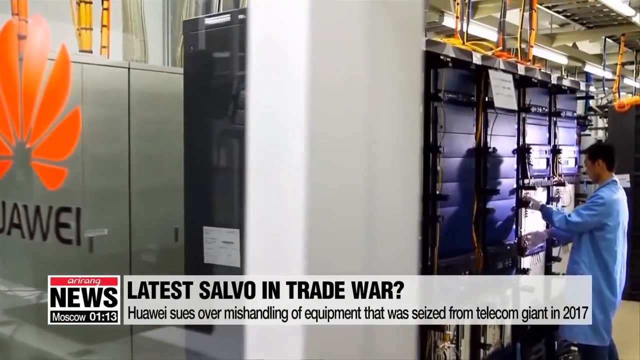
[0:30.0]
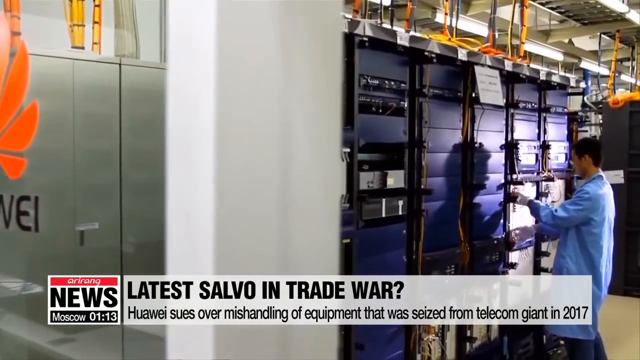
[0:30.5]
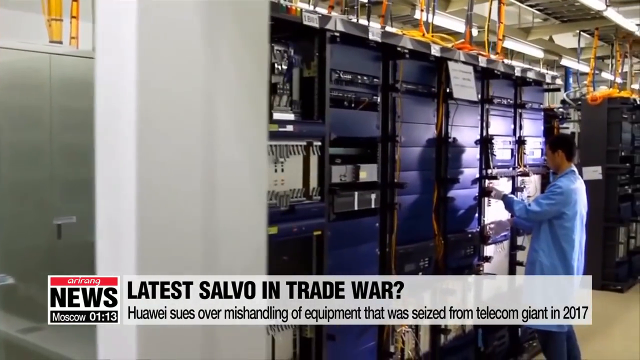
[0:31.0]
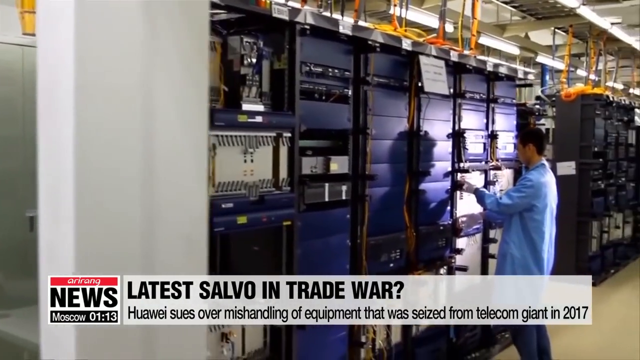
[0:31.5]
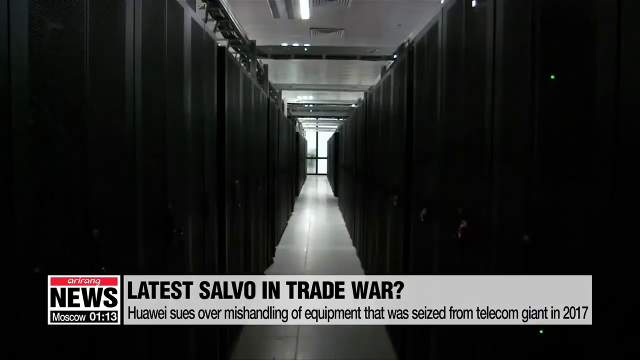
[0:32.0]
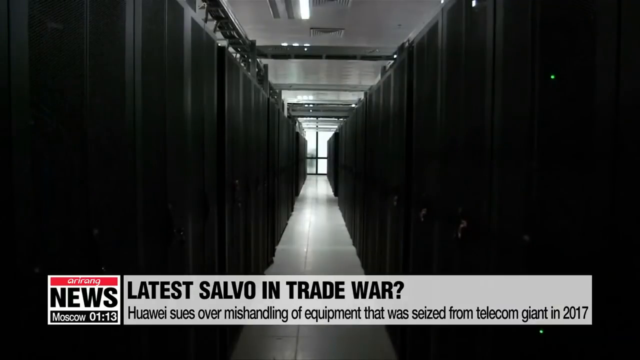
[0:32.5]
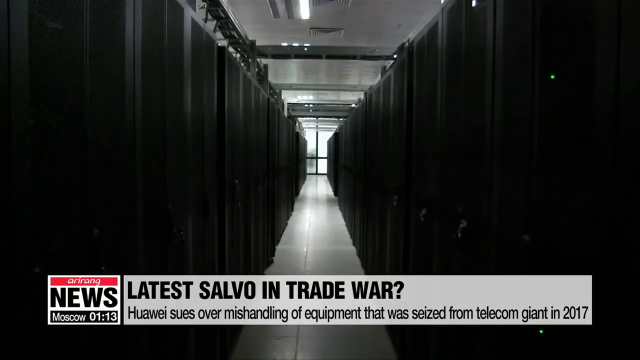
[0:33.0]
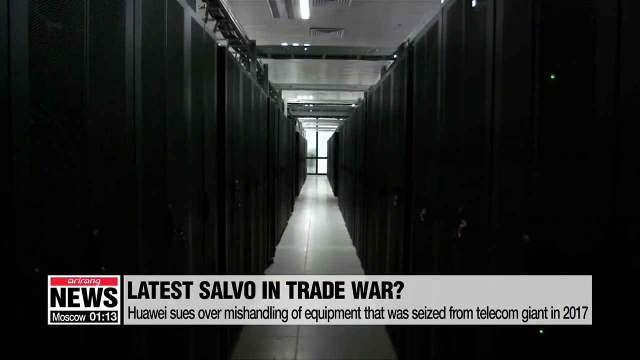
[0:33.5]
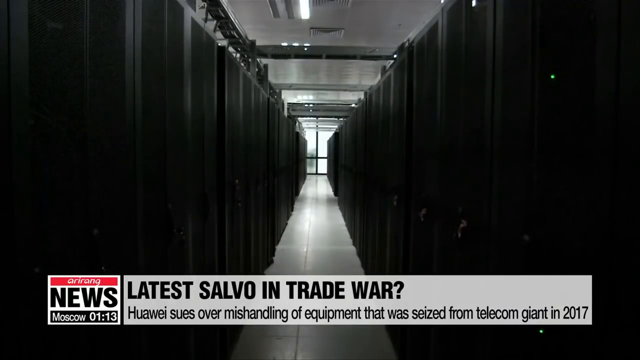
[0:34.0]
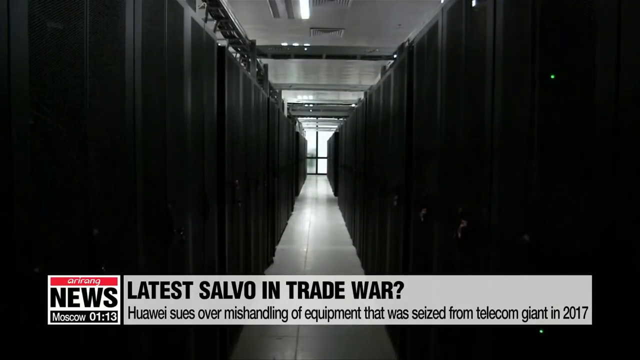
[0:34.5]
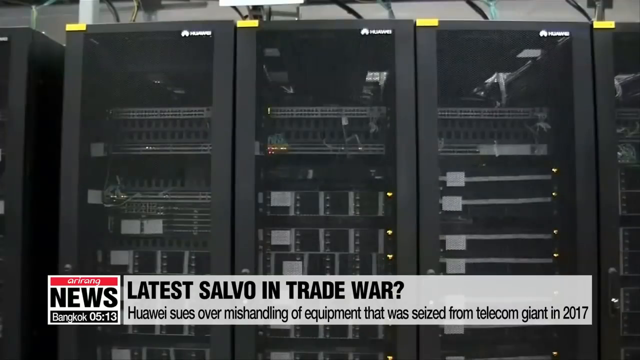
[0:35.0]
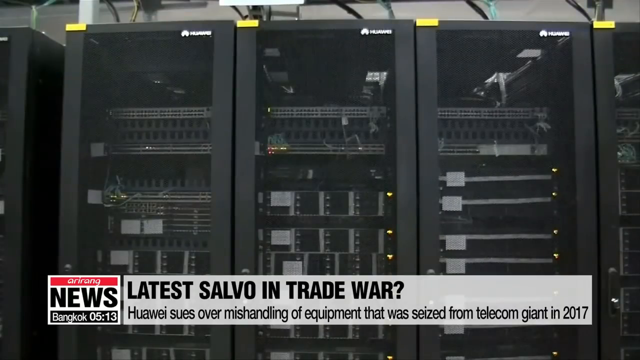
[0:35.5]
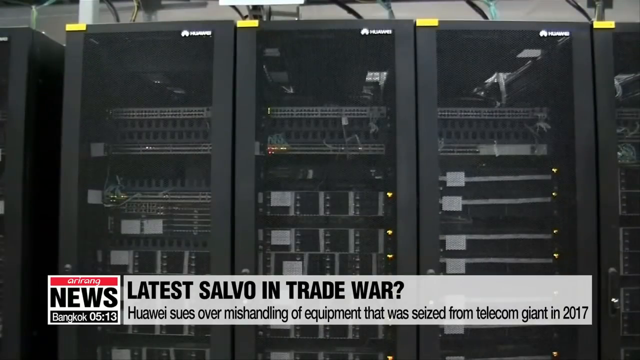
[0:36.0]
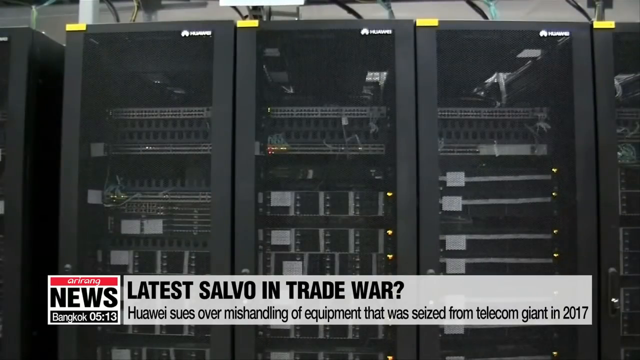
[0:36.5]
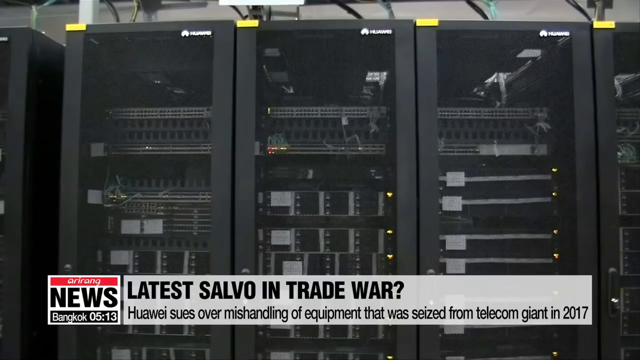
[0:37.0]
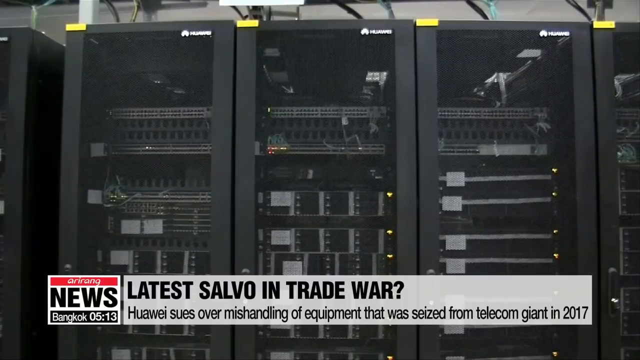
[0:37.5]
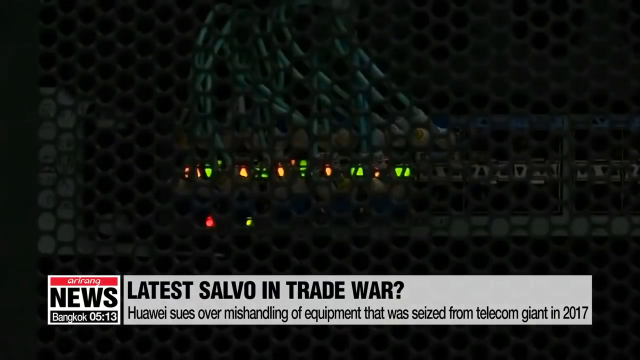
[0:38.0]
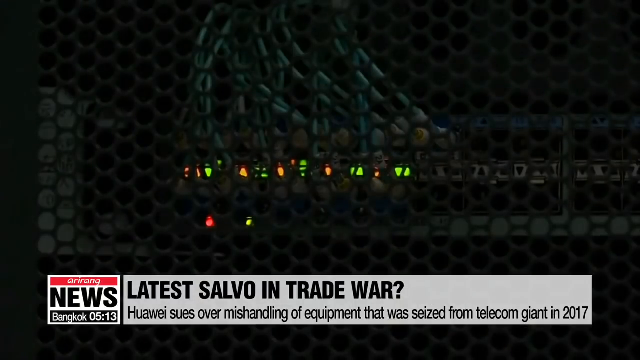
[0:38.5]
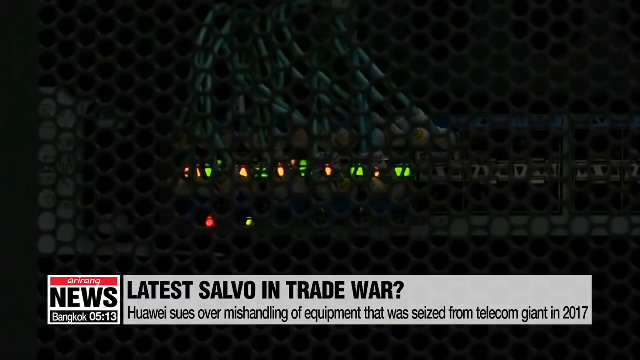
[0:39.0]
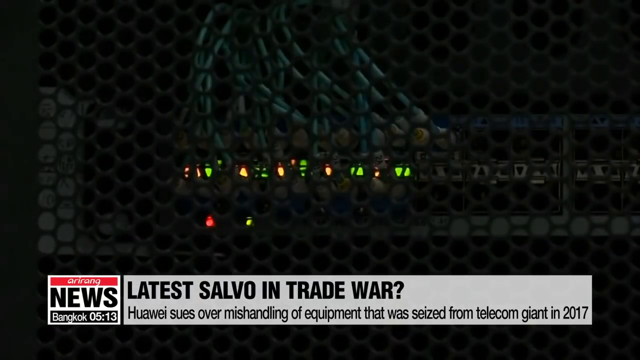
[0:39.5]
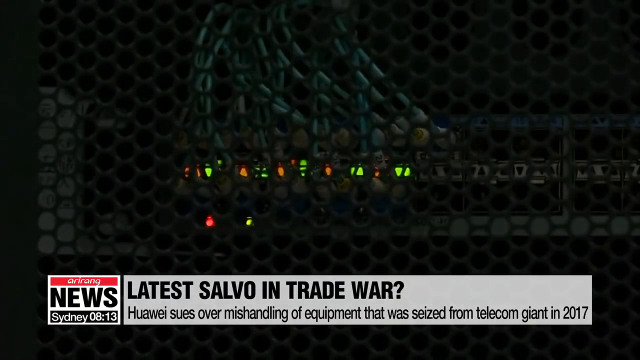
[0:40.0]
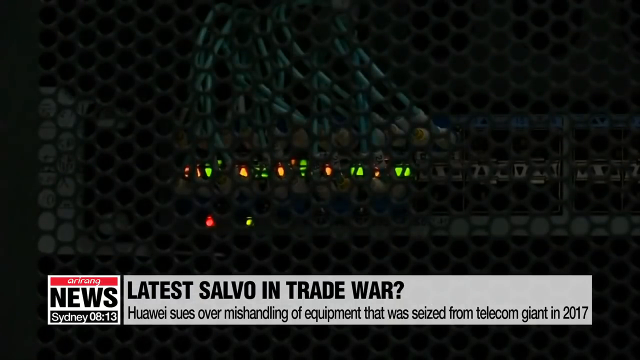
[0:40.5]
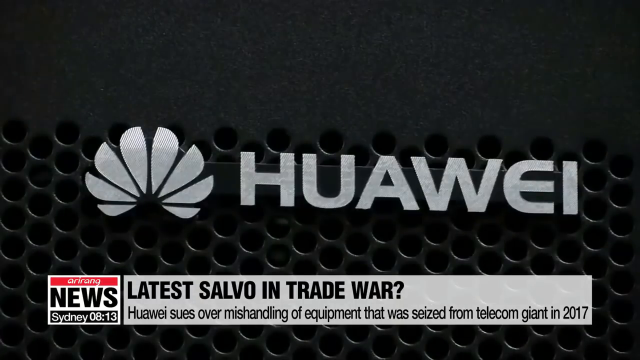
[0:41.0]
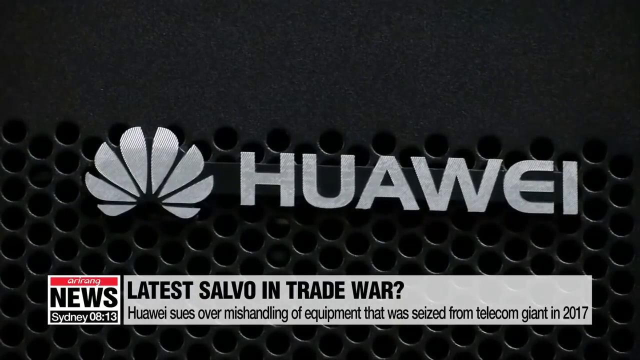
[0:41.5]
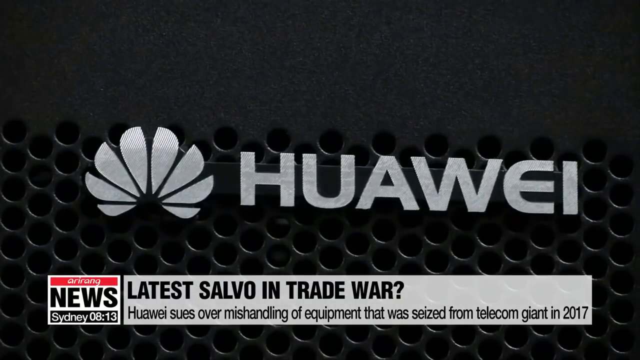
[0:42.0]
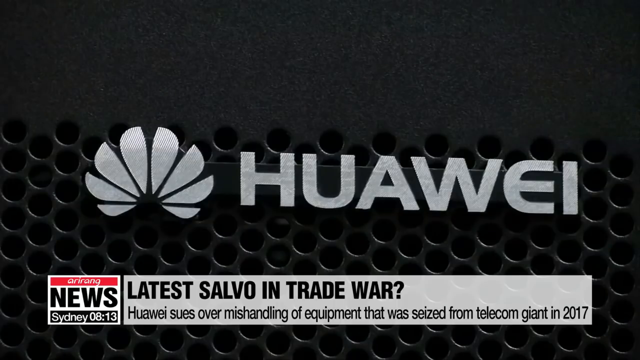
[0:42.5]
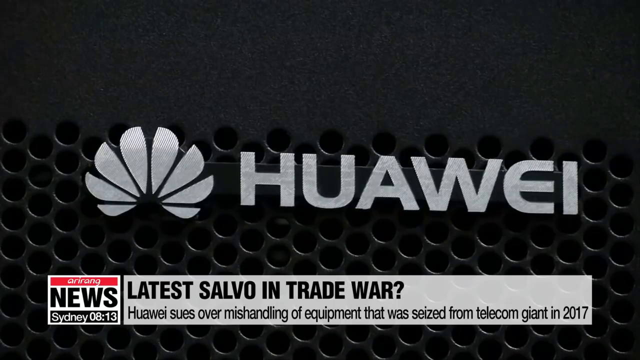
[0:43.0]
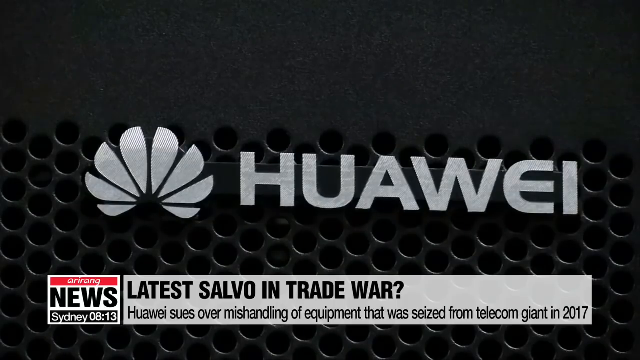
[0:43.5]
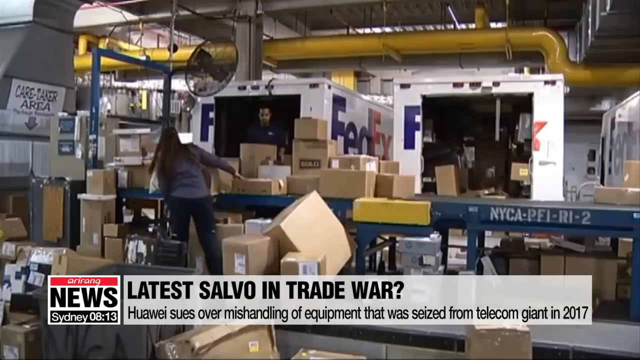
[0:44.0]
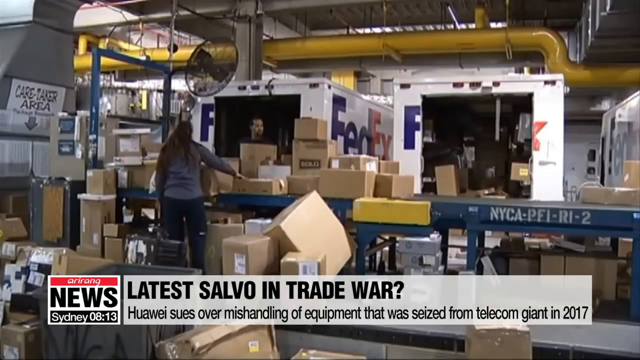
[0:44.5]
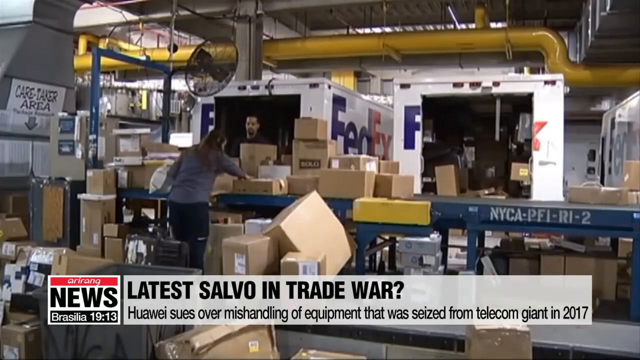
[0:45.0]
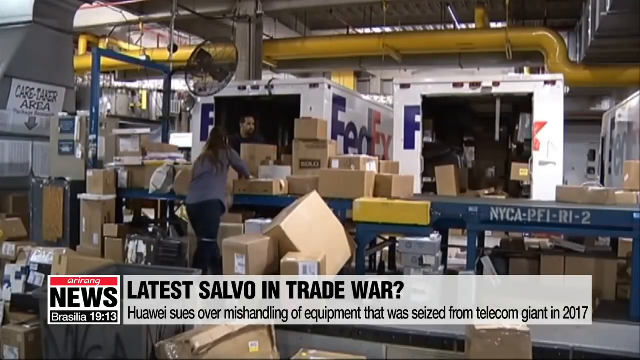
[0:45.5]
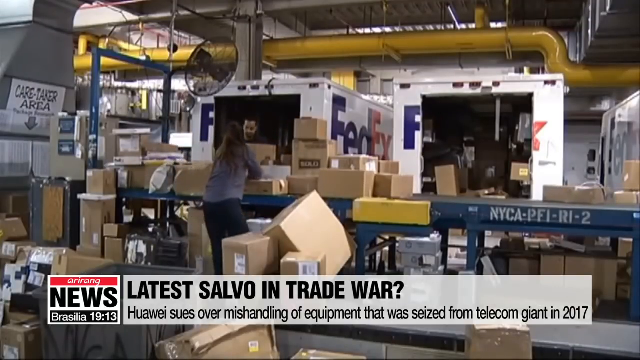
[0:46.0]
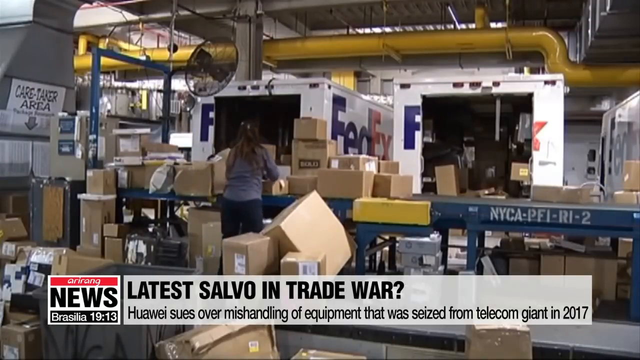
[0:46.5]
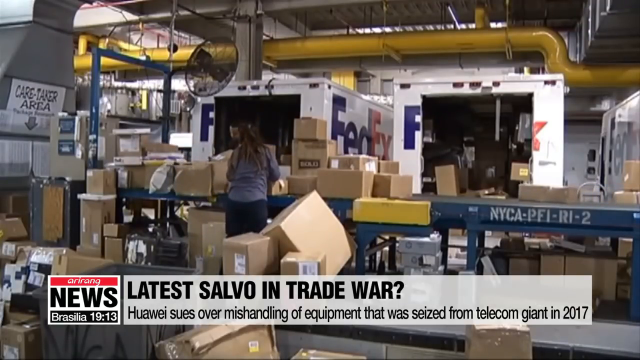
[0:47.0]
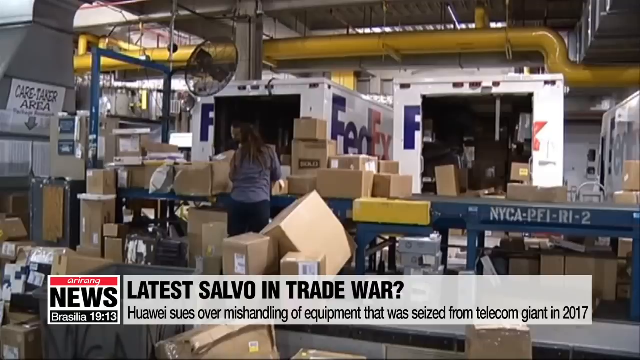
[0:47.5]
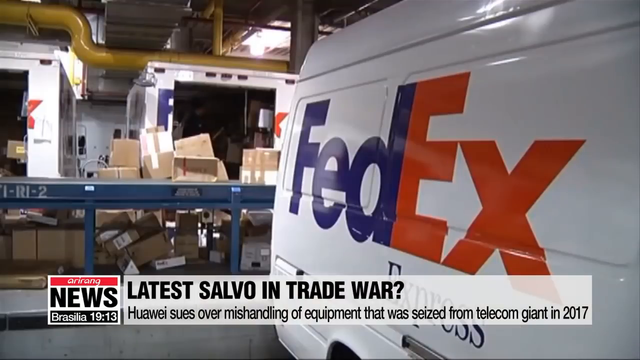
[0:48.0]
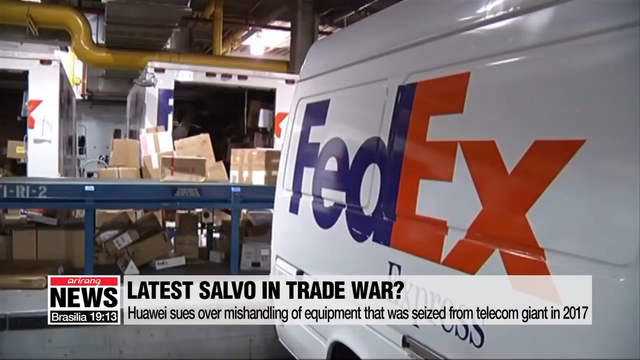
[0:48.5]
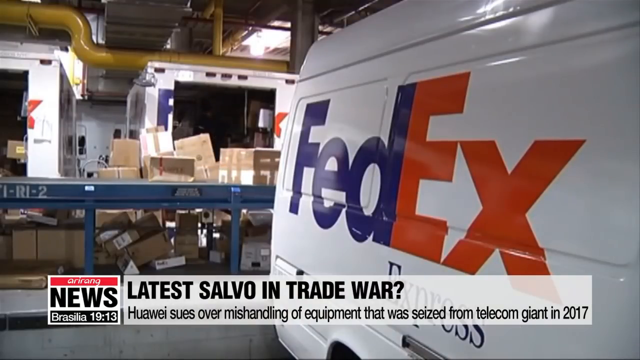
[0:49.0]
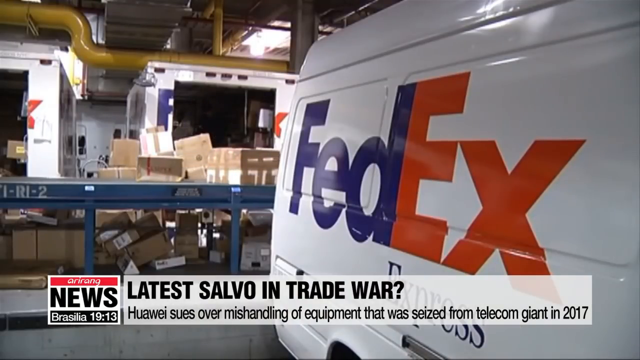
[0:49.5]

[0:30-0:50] A window is framed, with an orange logo on it and black writing under the logo. The camera moves from left to right, briefly passing a white vertical structure. In the background is a man wearing a light blue shirt and white gloves. A corridor is then shown, lined on the left and right with black cabinets, with a white floor and a rather large stained glass with black frames at its end. Next comes a photograph of three black parallelepiped structures whose transparent fronts reveal the components inside, followed by a close-up of a straight panel showing green, orange and red LEDs. Then white writing on a black background appears, followed by the interior of a warehouse where cardboard boxes move along a conveyor belt.